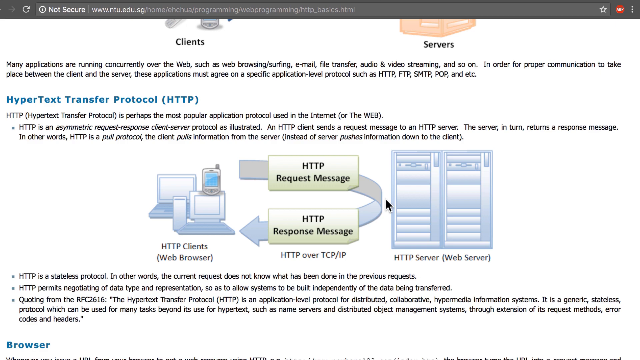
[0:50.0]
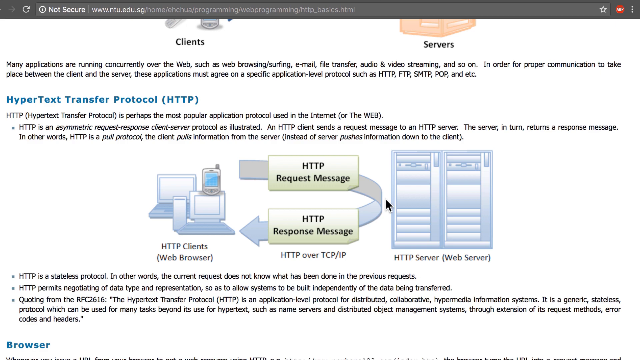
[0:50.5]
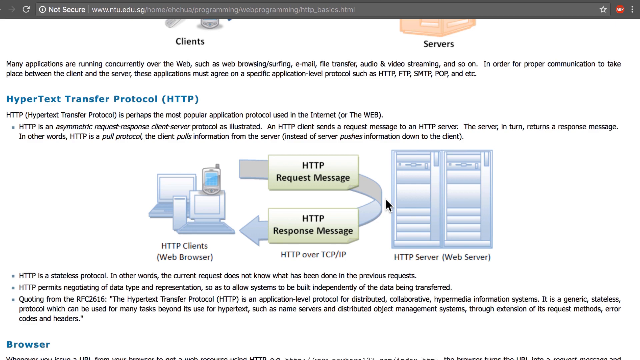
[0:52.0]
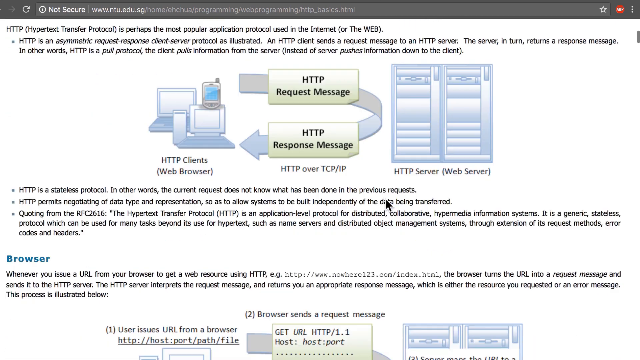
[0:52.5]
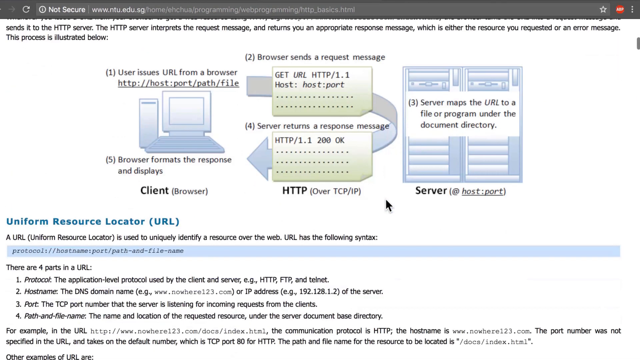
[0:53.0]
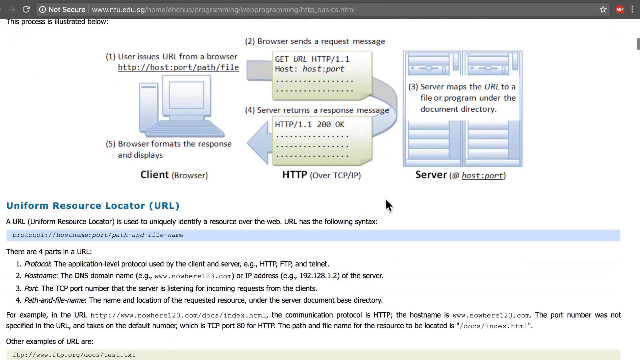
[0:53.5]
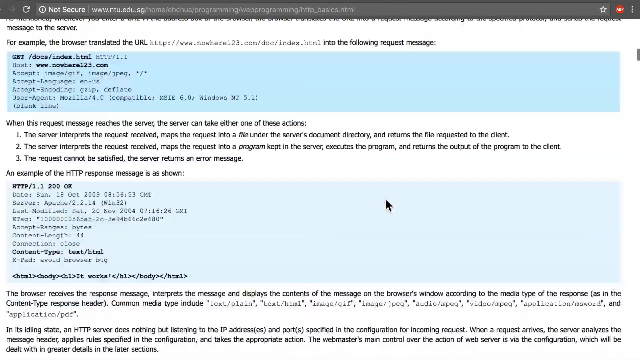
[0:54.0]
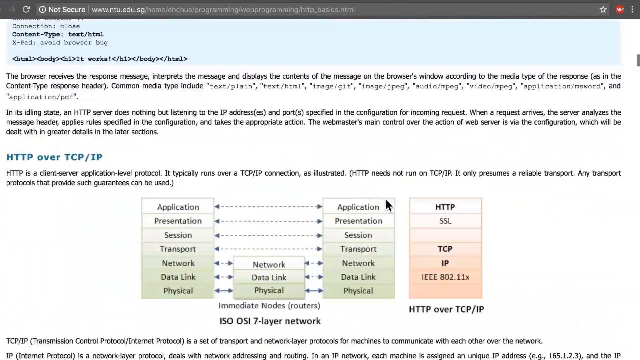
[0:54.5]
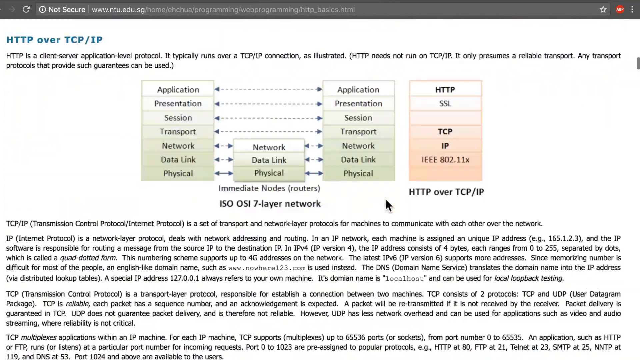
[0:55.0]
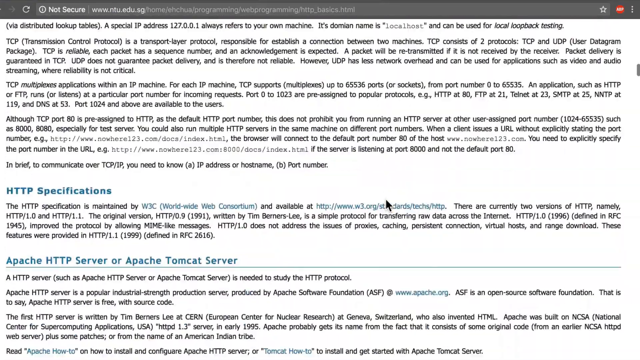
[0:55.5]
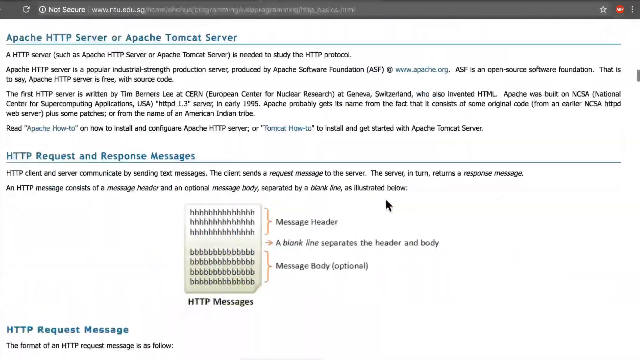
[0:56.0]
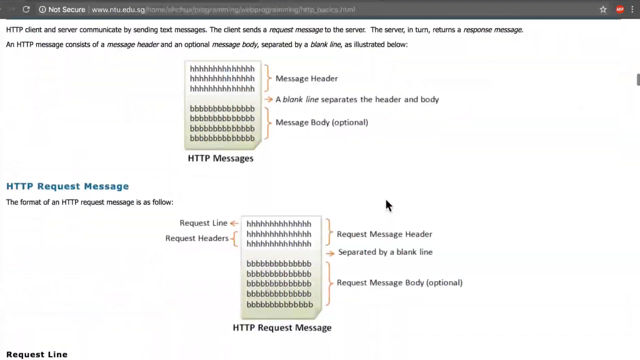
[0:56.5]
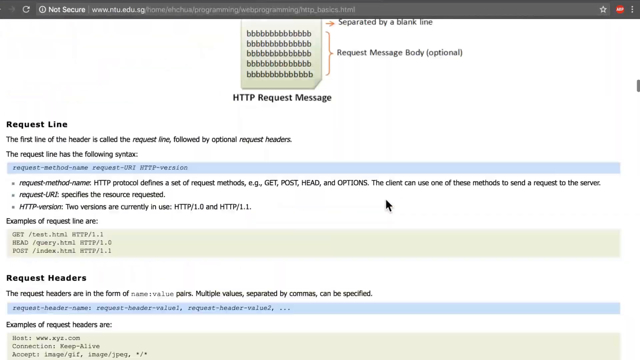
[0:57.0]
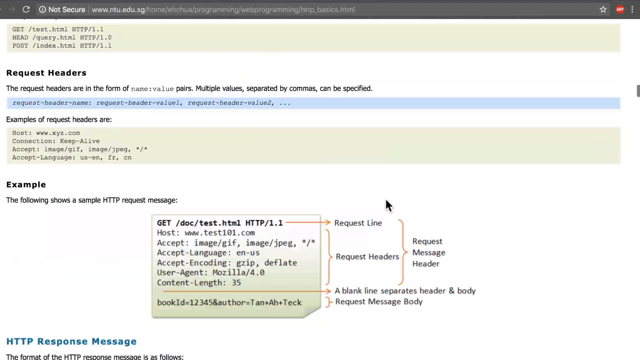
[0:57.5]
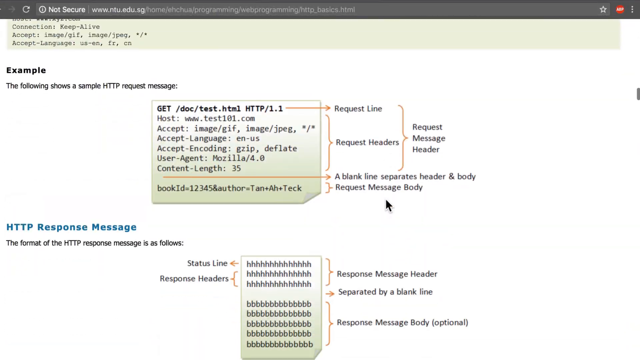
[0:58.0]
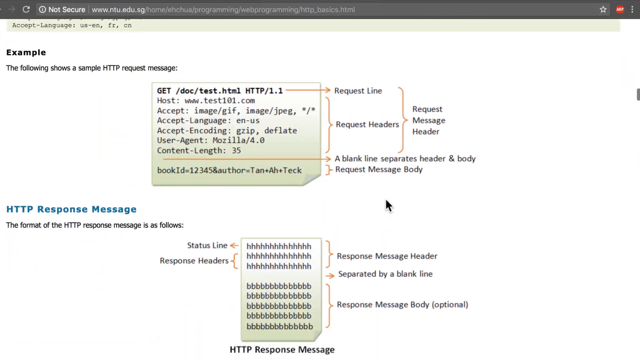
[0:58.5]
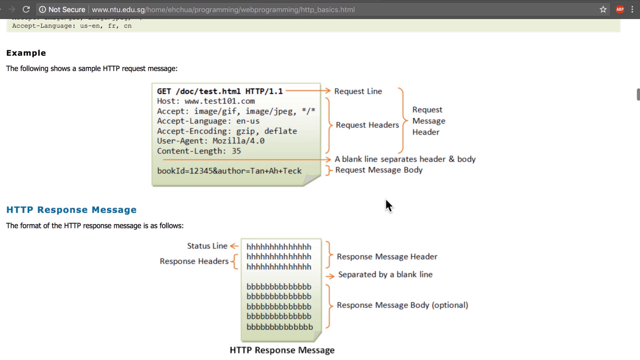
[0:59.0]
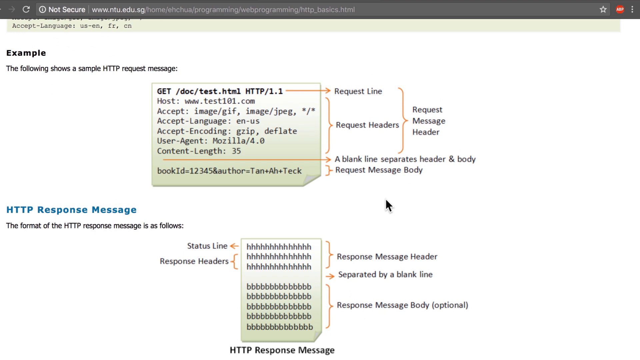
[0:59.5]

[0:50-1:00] A web page shows clients on the left side and servers on the right, beneath an icon at the top. Underneath is text reading "many applications running concurrently over the web, such as web browsing, surfing, email, file transfer, audio, video streaming, and so on," along with text stating that these applications need a protocol for proper communication between client and server, such as HTTP, FTP, SMTP, and POP. A section on Hypertext Transfer Protocol, HTTP, gives its definition and a small diagram showing how HTTP connects from the computer to the client. The narrator then scrolls rapidly down the page to examples of how this is done in a live situation with the internet.